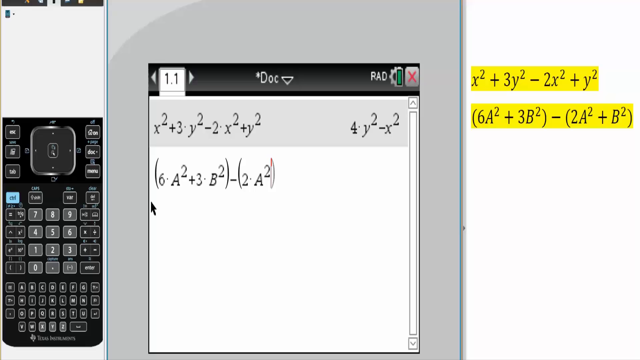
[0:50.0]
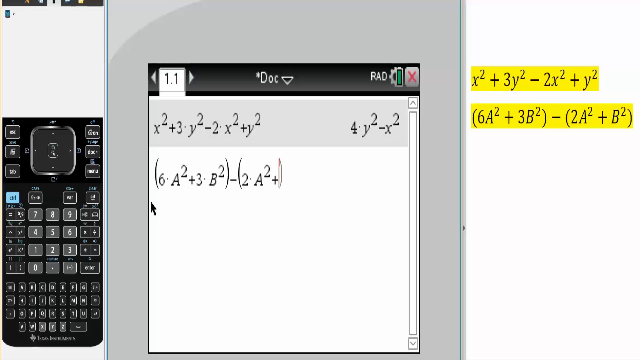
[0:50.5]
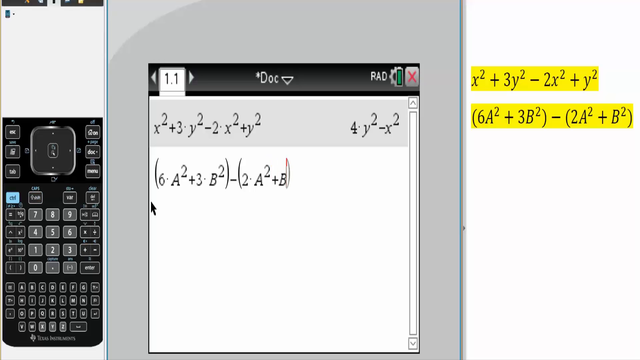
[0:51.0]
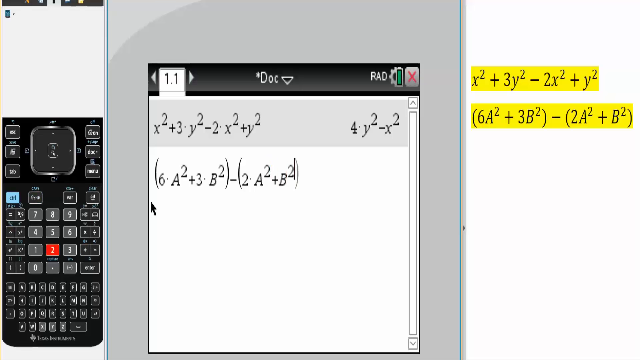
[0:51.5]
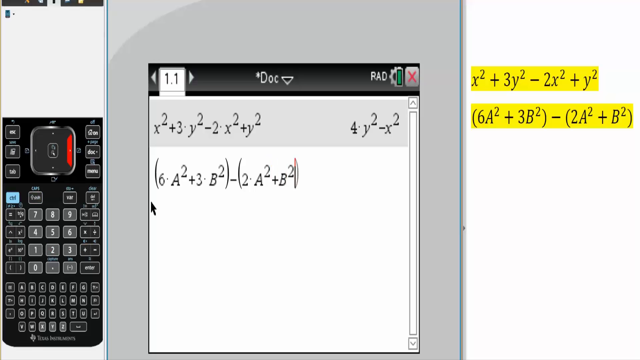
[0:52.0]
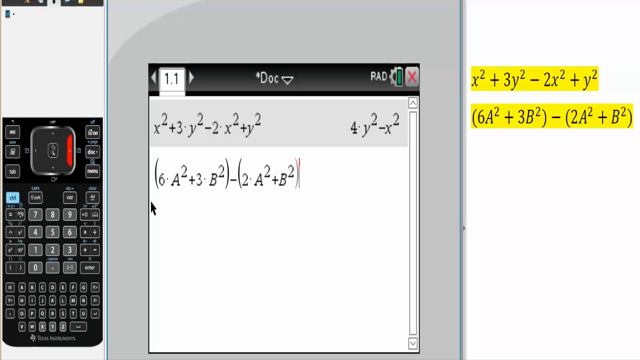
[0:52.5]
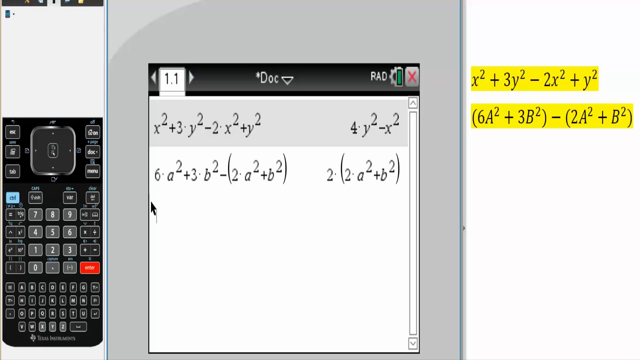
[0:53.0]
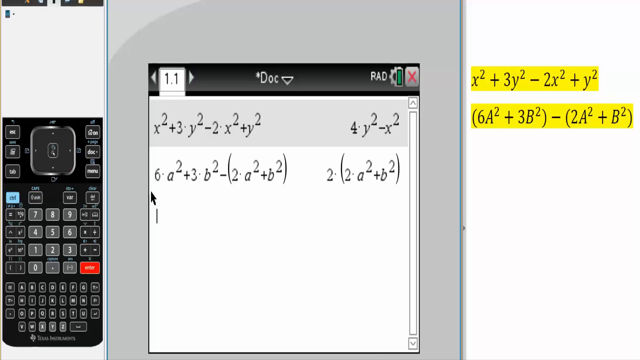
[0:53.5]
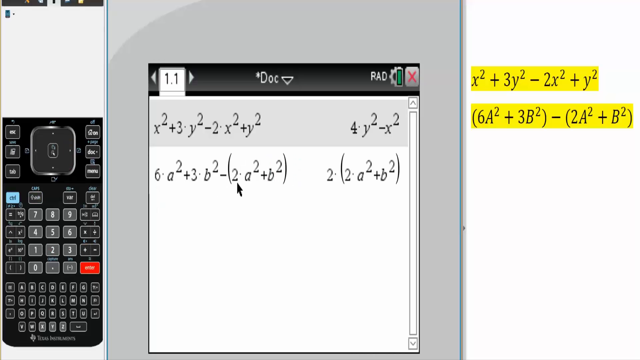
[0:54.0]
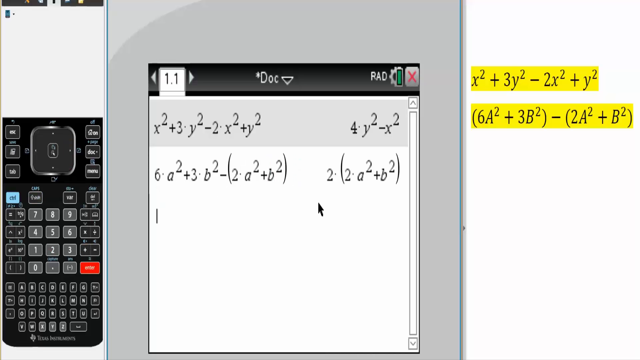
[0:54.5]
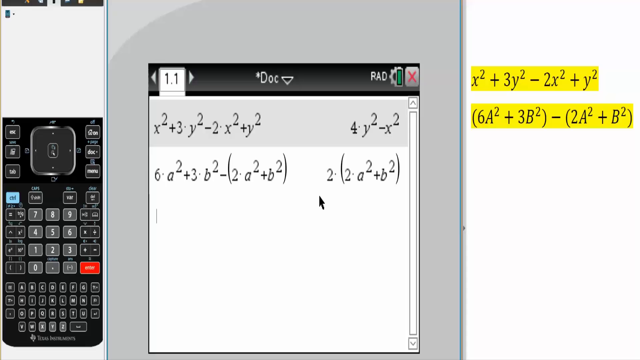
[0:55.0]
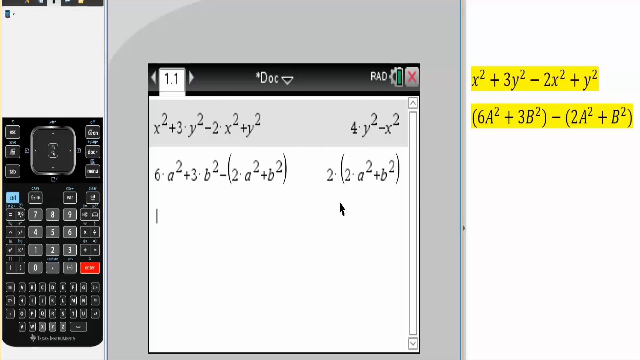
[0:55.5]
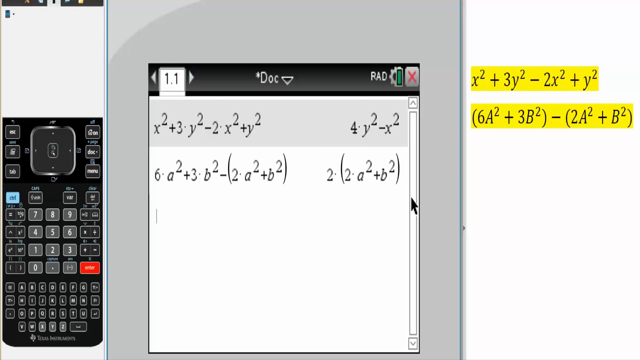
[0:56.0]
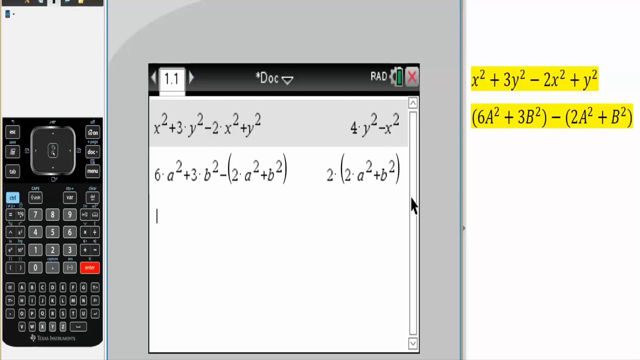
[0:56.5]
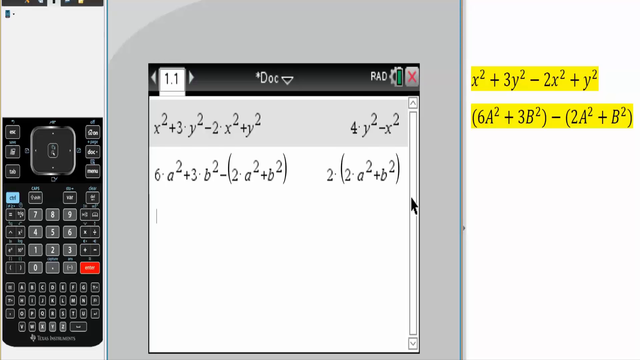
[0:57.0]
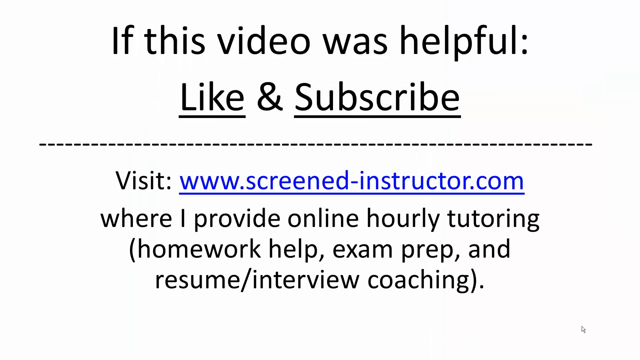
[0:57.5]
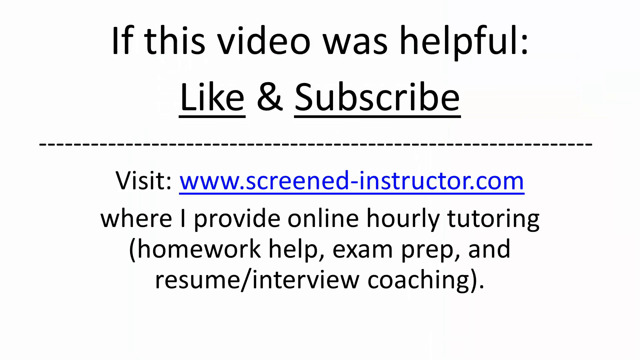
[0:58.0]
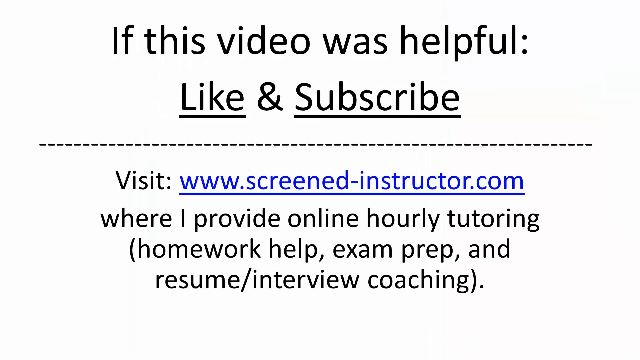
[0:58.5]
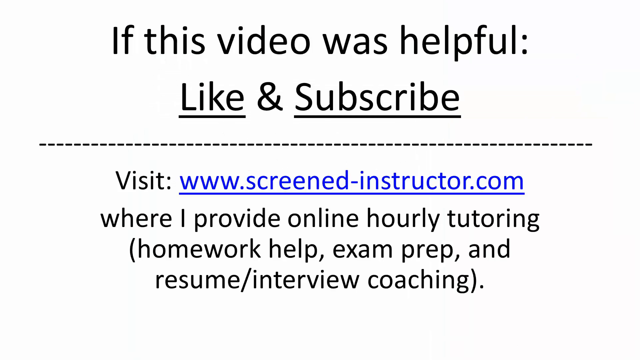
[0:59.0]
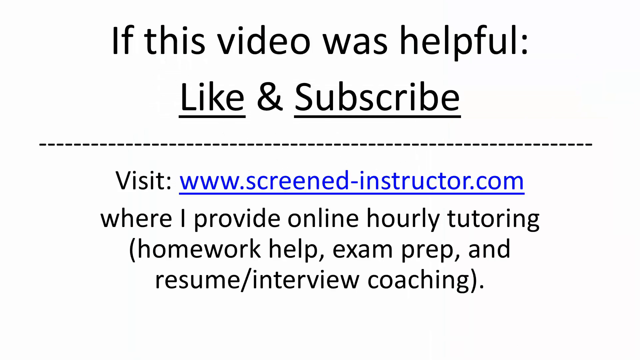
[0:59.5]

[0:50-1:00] The individual continues using a smart device or smart calculator. The main focus is the device's screen with an open document where the individual works out math problems, which appear to be algebra. The individual is simplifying the algebra problems, and the calculator works very quickly in simplifying them. On the right side, problems yet to be worked on are on a piece of paper. The individual uses what appears to be a computer mouse to navigate the smart device screen, and buttons on the device being pressed are indicated with a blinking red light or red glow.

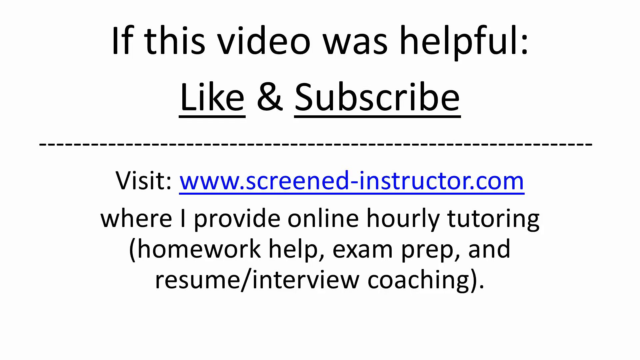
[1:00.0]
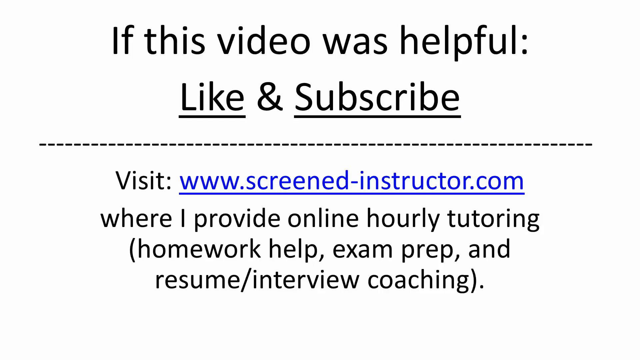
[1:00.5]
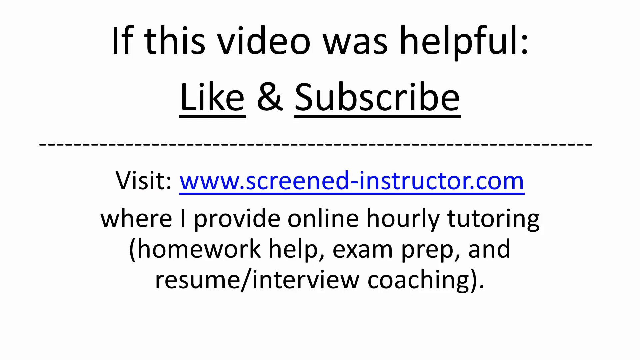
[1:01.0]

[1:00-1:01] A static image shows text in large black font on a white background. The top line reads "If the video was helpful," followed by the words "like and subscribe." Below this, a dotted line separates the first message from a second message that reads "Visit www.screenedinstructor.com". Underneath the website address, text reads "It offers online hourly tutoring, this includes homework help, exam preparation, and CV and interview assistance."